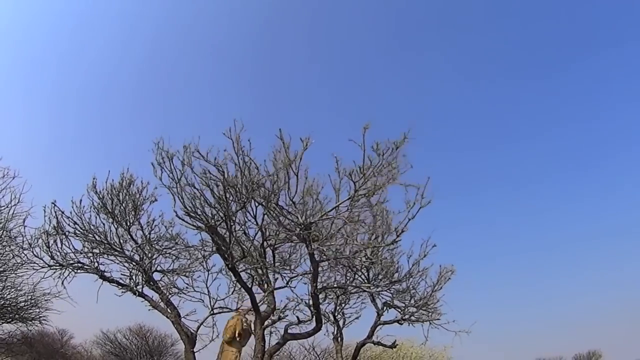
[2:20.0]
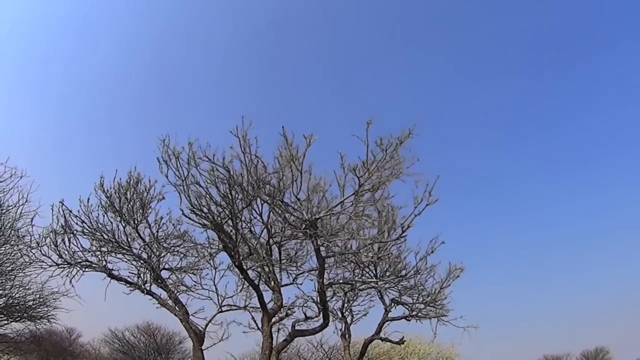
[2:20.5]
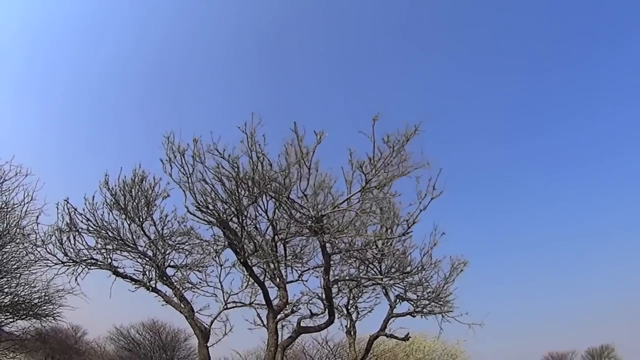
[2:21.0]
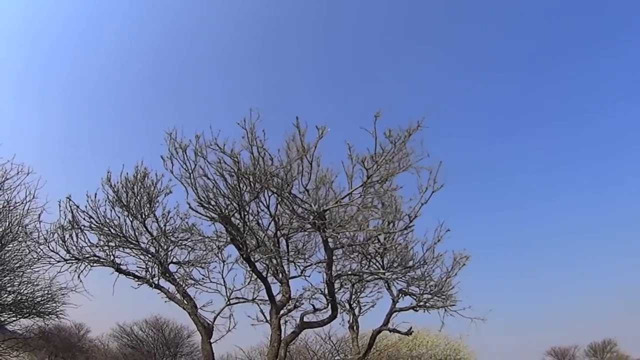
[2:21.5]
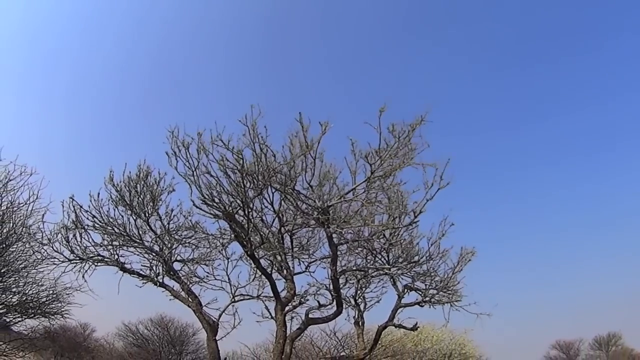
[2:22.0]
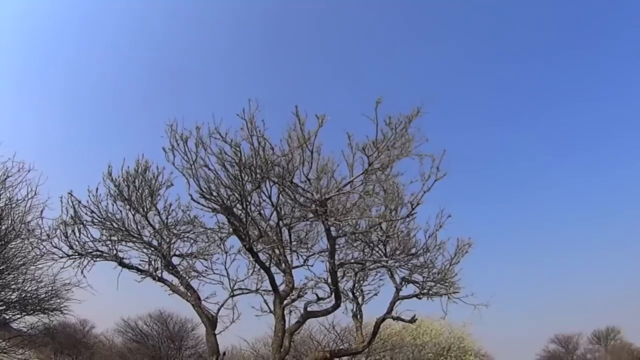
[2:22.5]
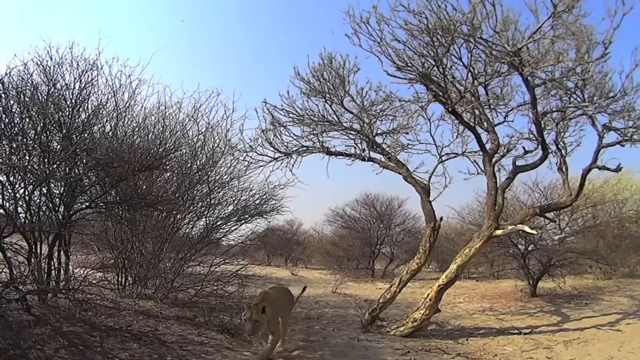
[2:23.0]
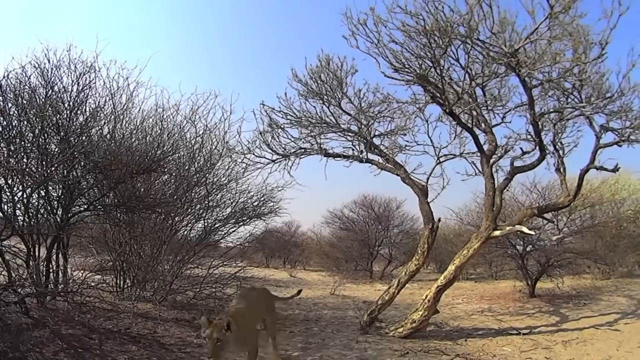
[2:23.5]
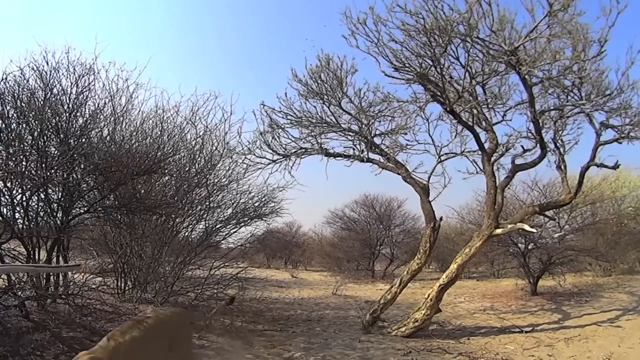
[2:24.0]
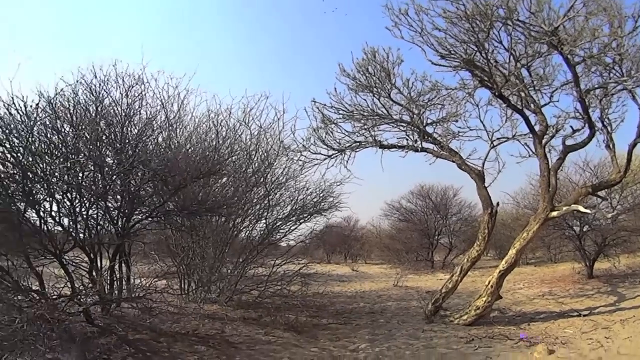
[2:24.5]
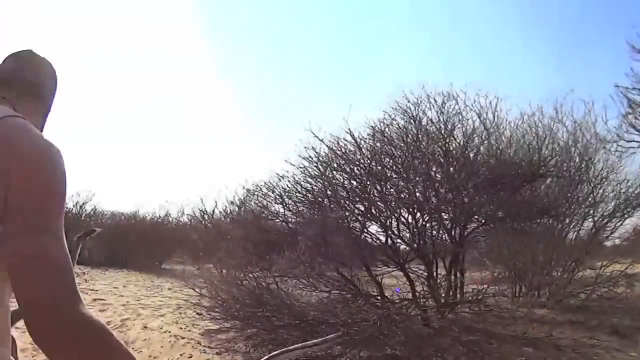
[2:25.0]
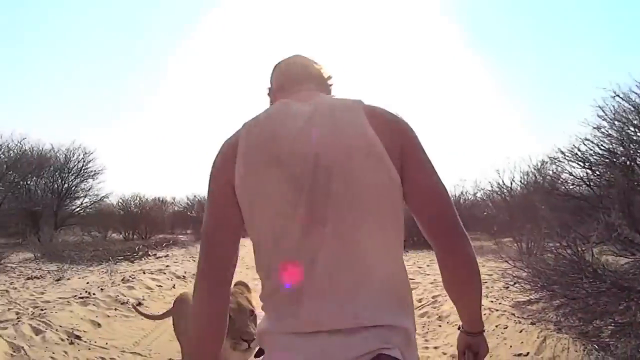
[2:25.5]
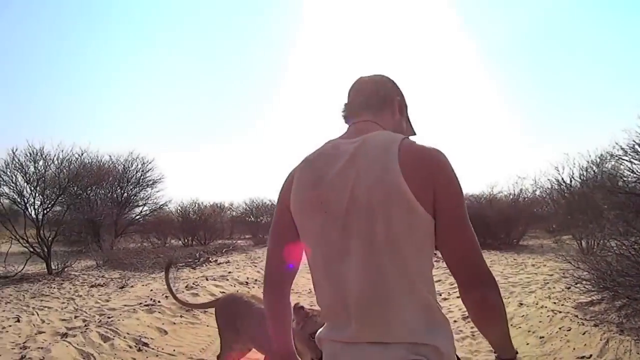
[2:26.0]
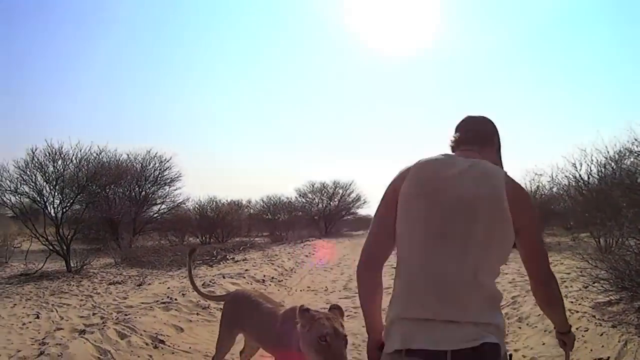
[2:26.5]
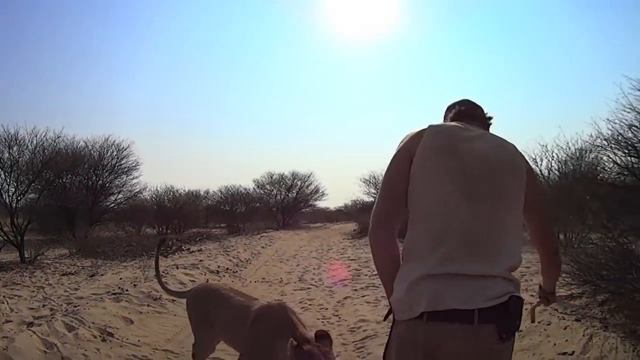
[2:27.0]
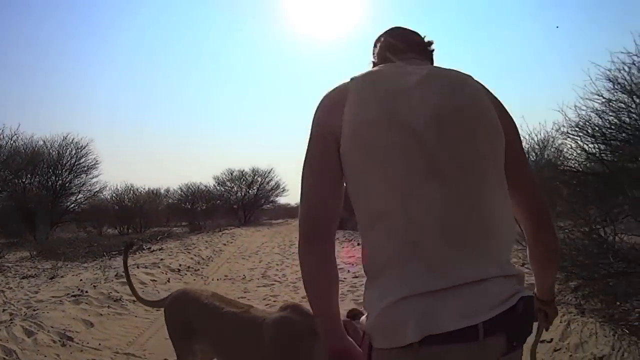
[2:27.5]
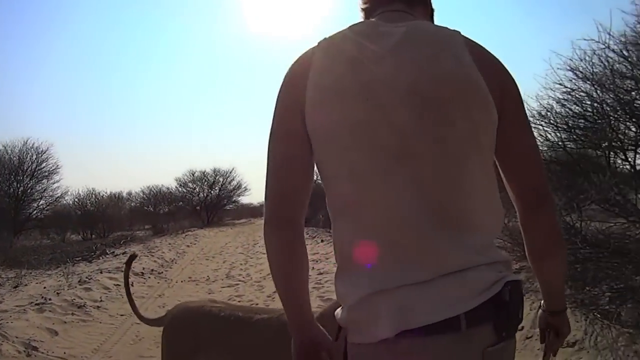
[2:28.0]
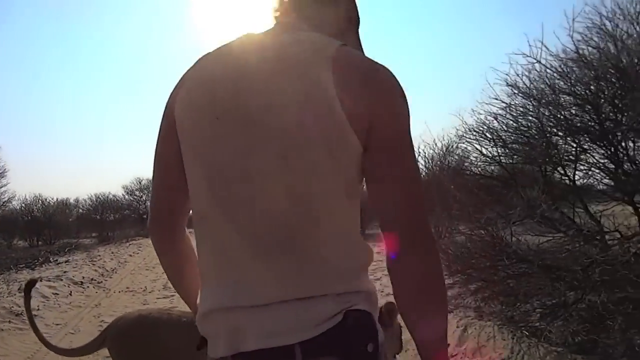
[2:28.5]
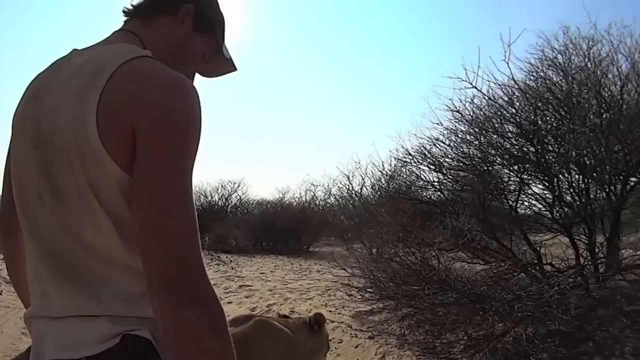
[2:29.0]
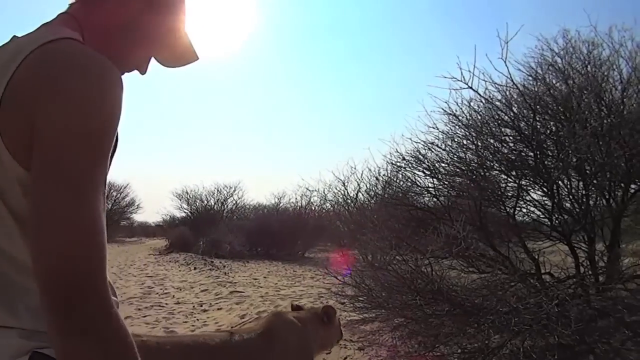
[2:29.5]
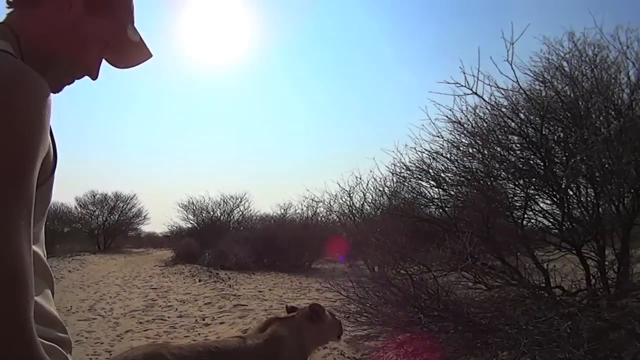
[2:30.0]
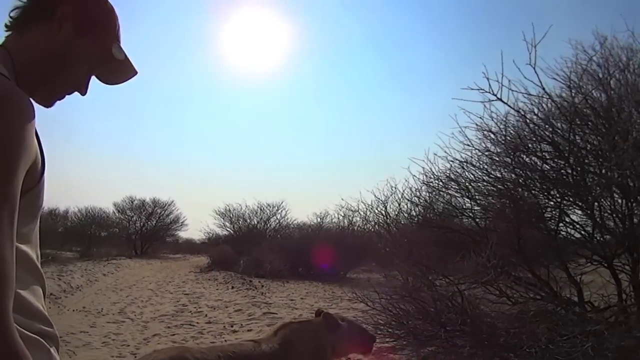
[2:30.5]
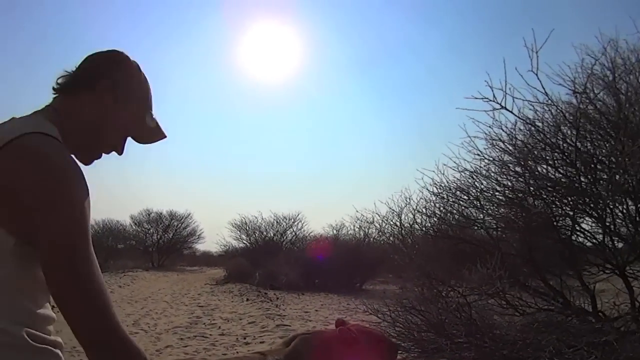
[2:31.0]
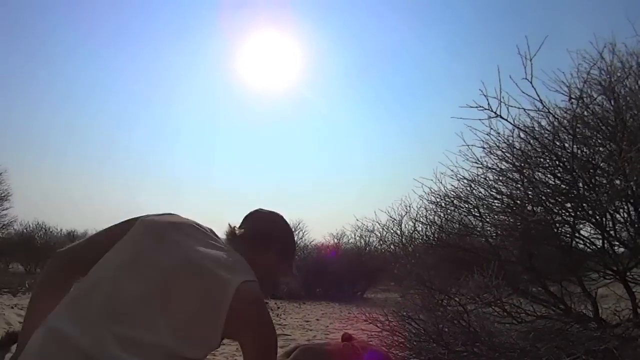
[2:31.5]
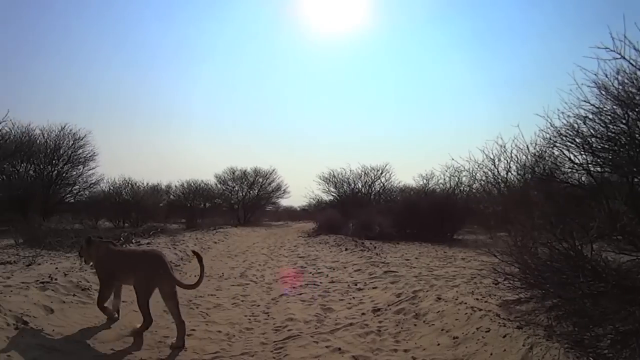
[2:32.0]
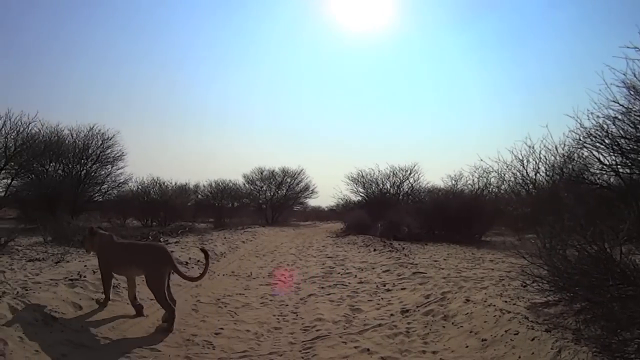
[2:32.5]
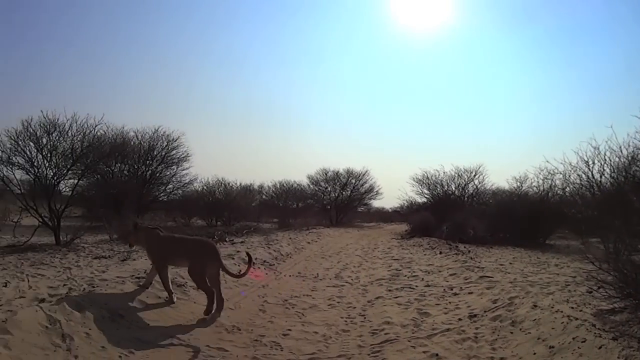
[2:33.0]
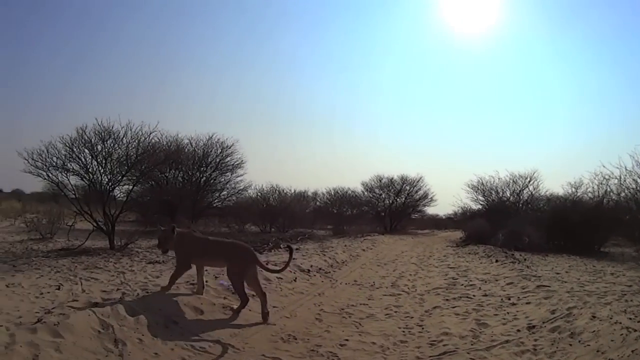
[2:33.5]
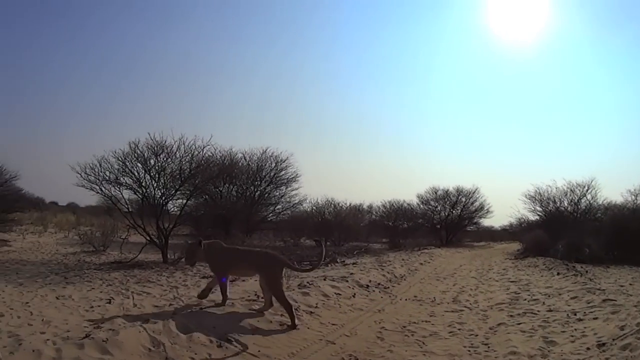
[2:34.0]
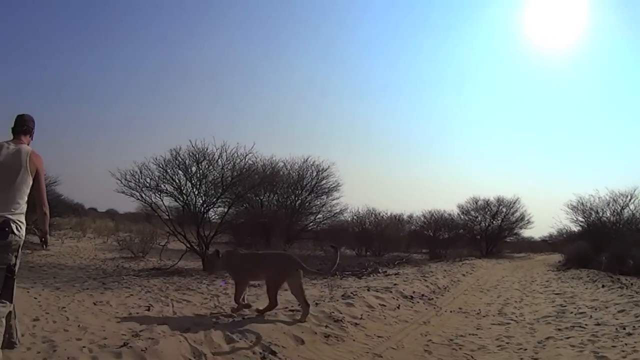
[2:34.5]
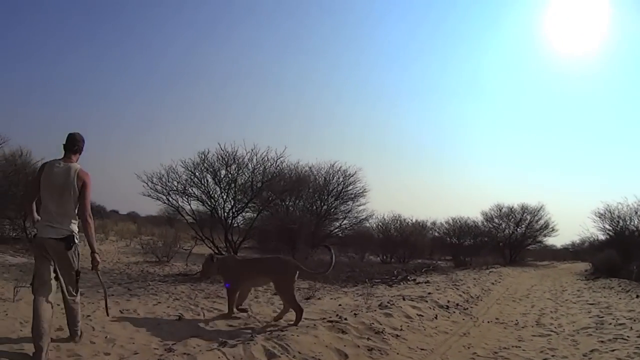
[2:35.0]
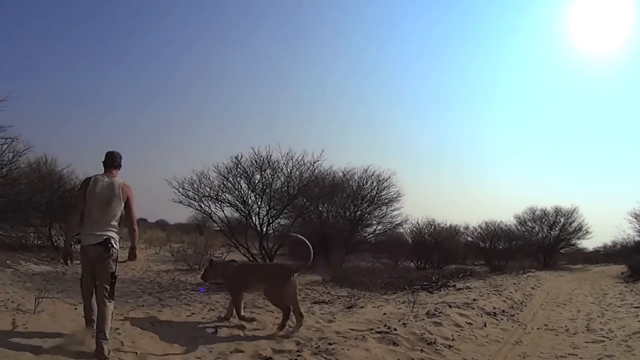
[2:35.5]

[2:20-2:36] The tree is blowing in the wind under a very blue sky, and the lion has just jumped off it. The camera pans to the lion as it goes to the man, who wears a white tank top, cargo pants, and a baseball hat. The sun is directly visible in the sky for the first time. The two then continue very slowly down the sandy road, as if they might be a little tired.